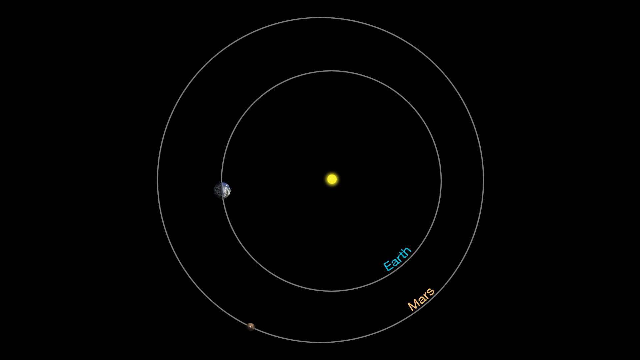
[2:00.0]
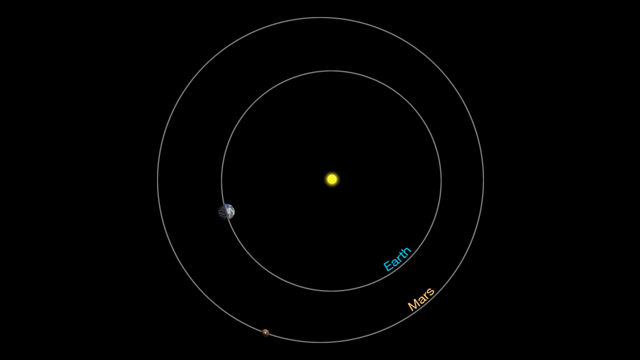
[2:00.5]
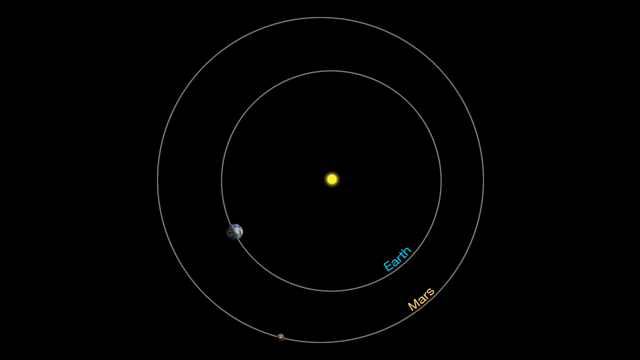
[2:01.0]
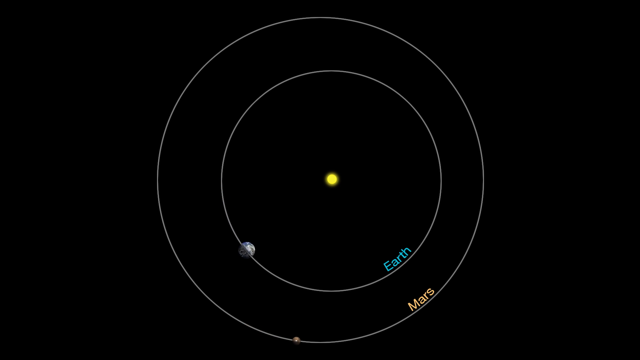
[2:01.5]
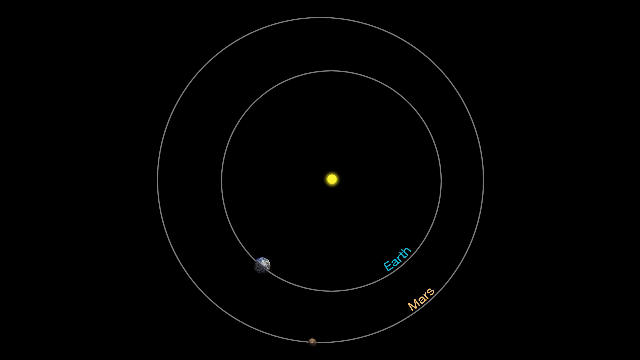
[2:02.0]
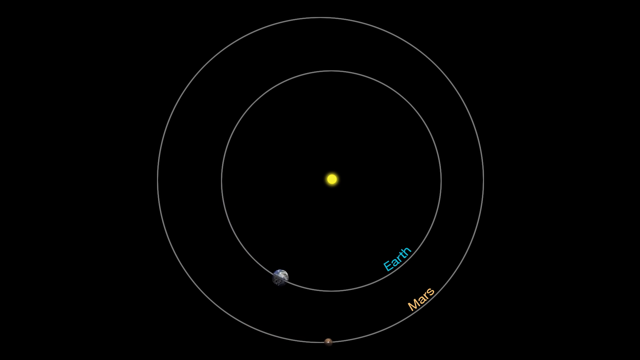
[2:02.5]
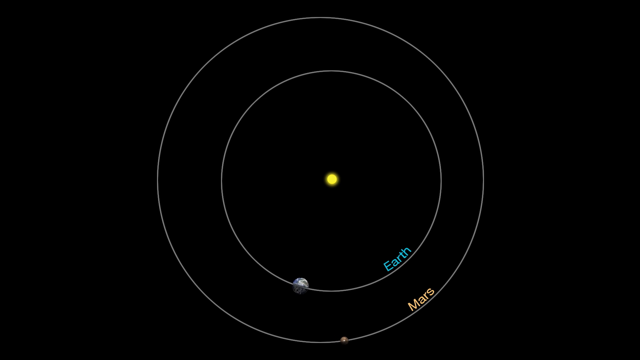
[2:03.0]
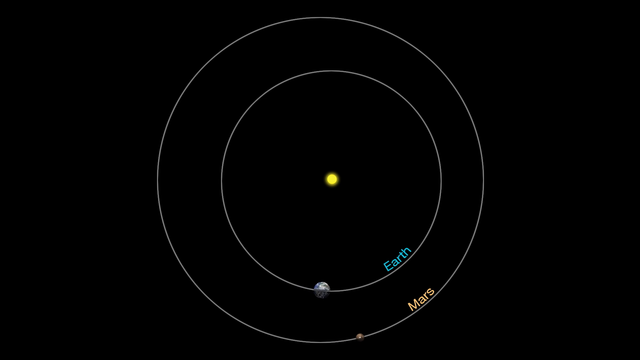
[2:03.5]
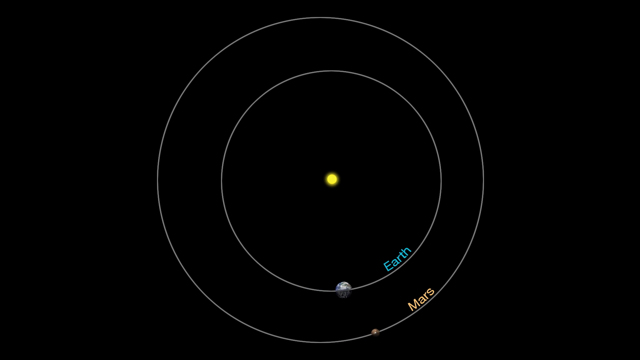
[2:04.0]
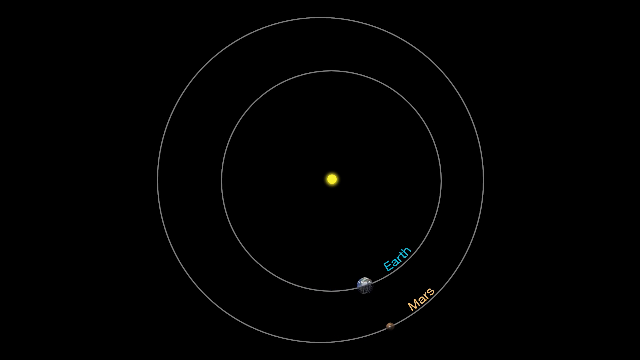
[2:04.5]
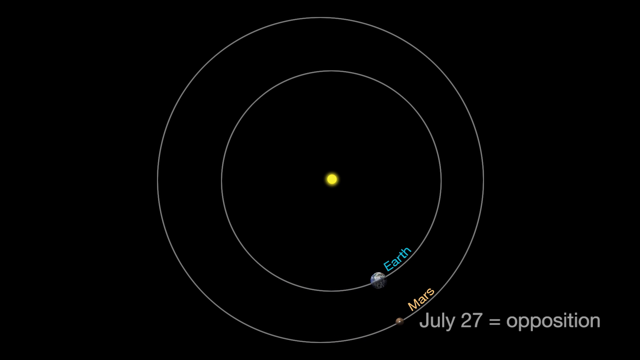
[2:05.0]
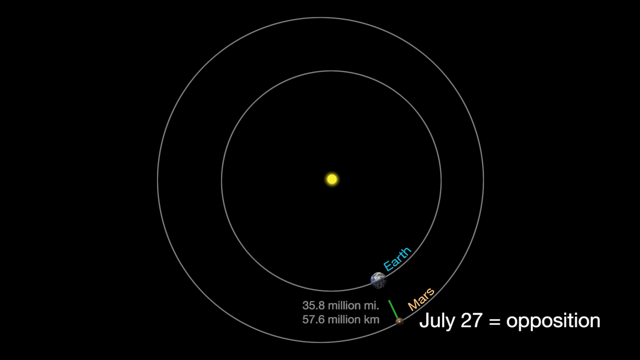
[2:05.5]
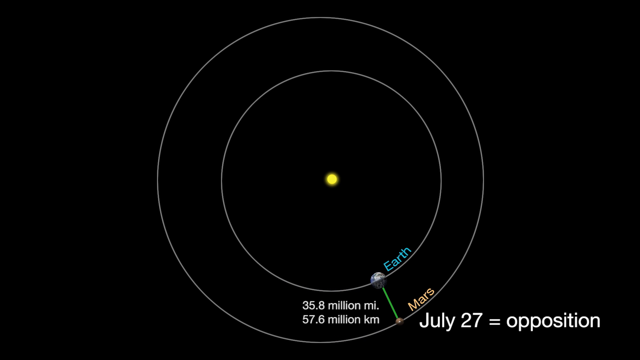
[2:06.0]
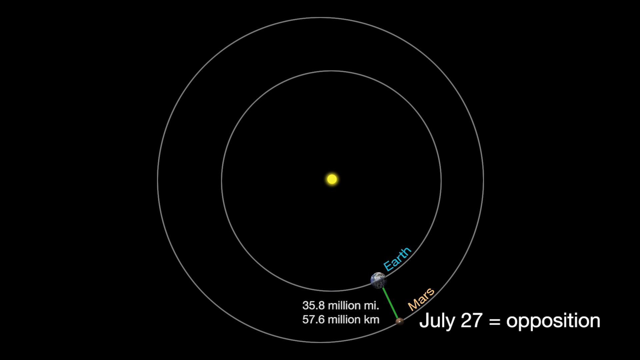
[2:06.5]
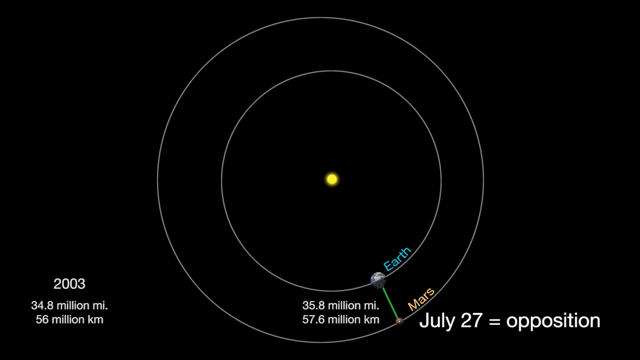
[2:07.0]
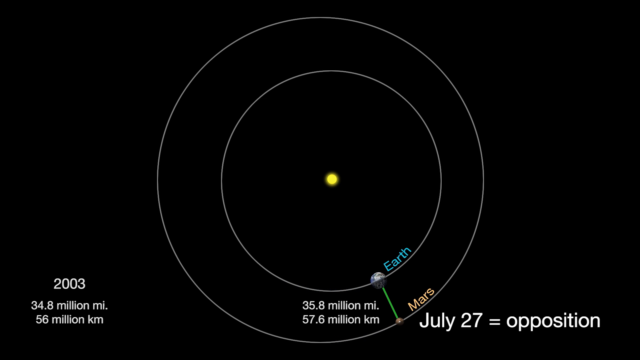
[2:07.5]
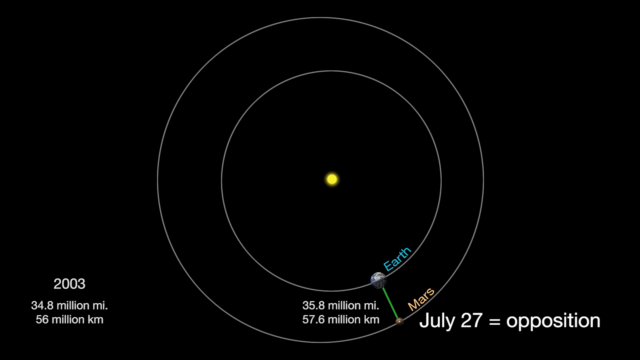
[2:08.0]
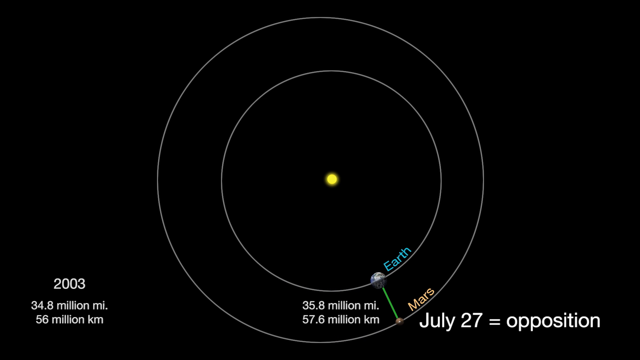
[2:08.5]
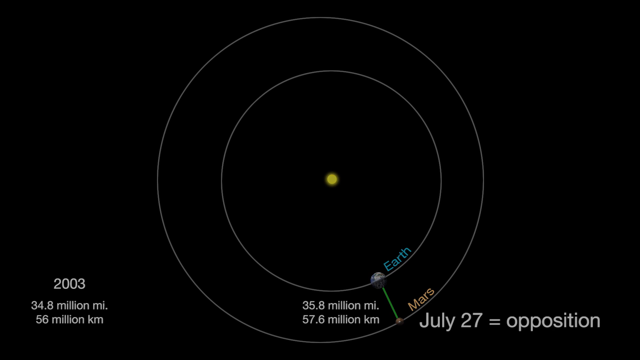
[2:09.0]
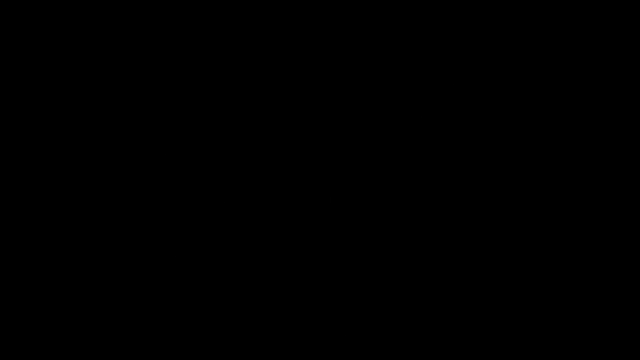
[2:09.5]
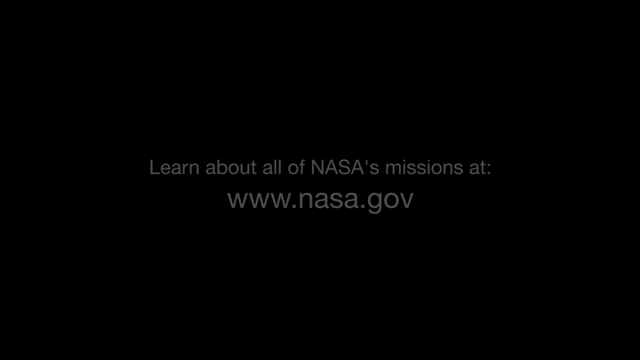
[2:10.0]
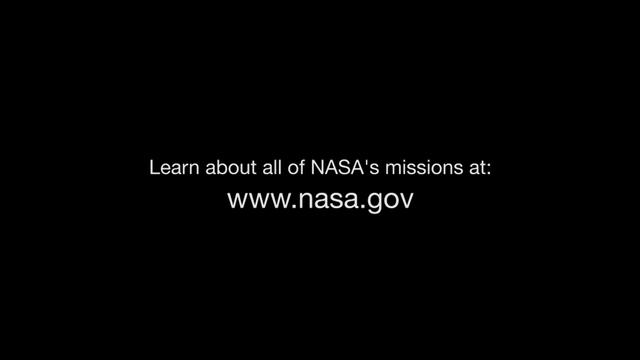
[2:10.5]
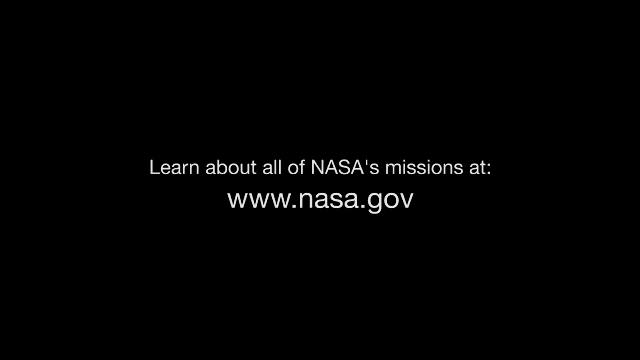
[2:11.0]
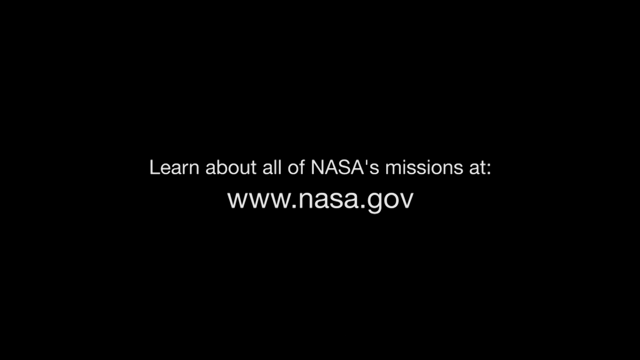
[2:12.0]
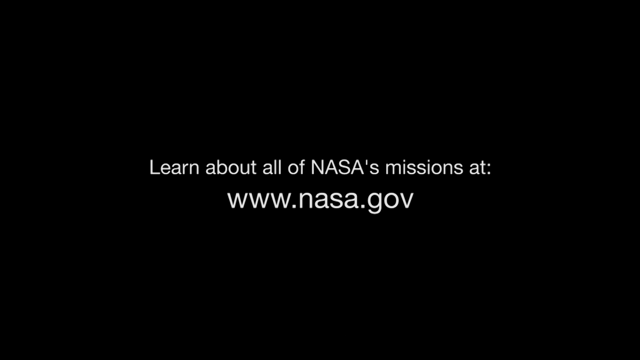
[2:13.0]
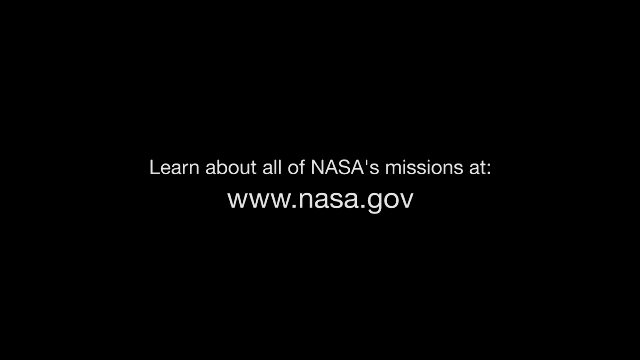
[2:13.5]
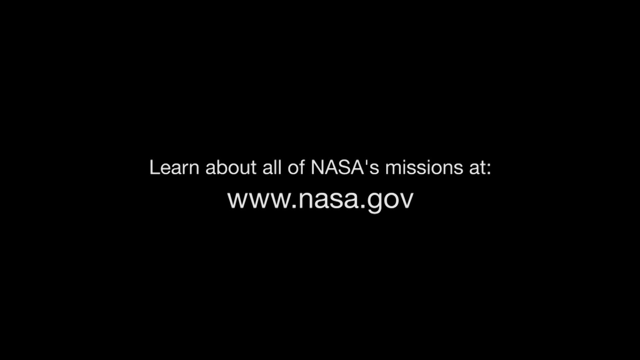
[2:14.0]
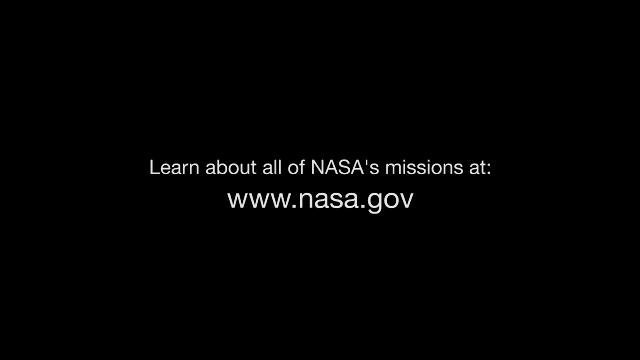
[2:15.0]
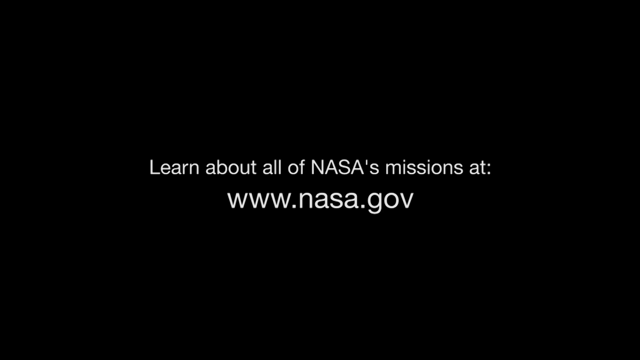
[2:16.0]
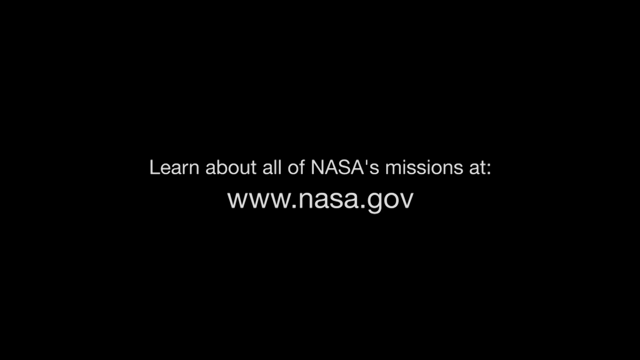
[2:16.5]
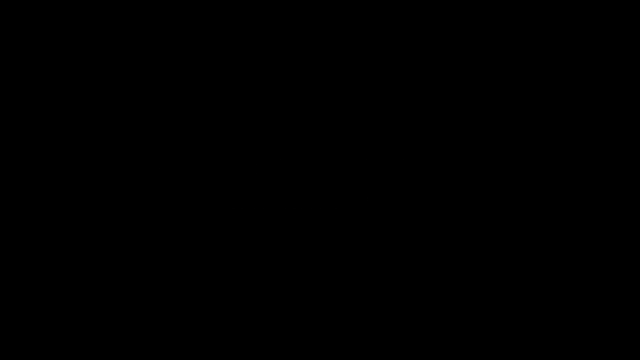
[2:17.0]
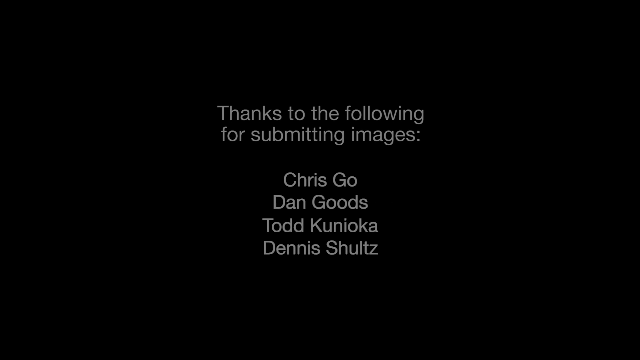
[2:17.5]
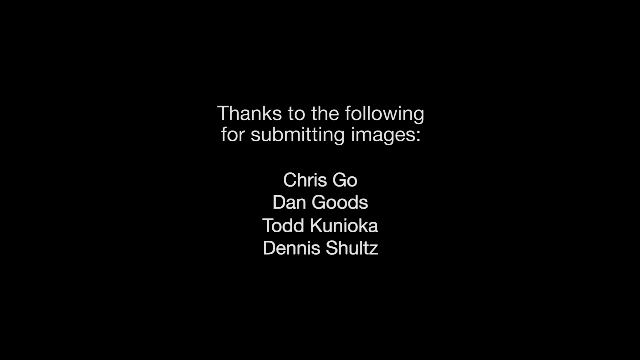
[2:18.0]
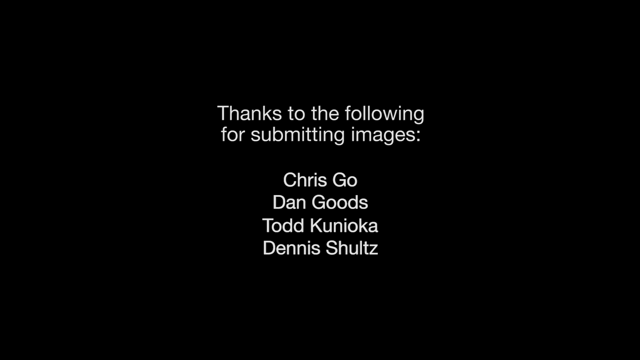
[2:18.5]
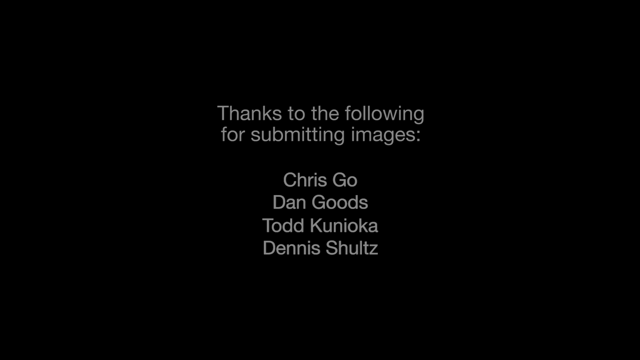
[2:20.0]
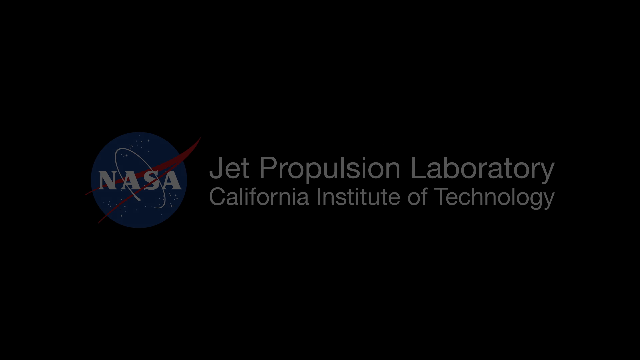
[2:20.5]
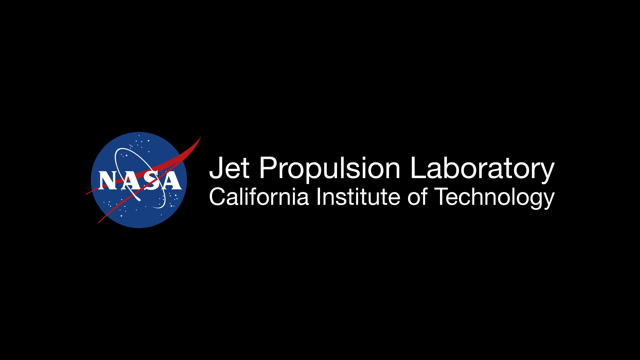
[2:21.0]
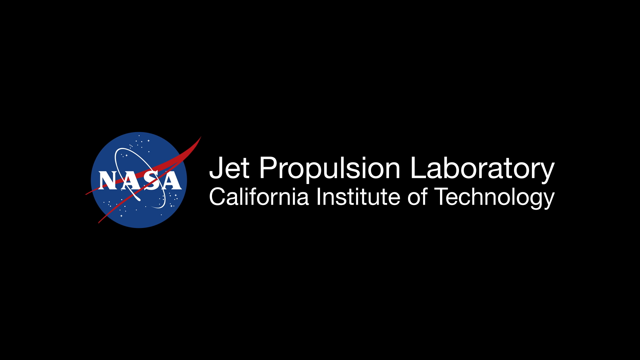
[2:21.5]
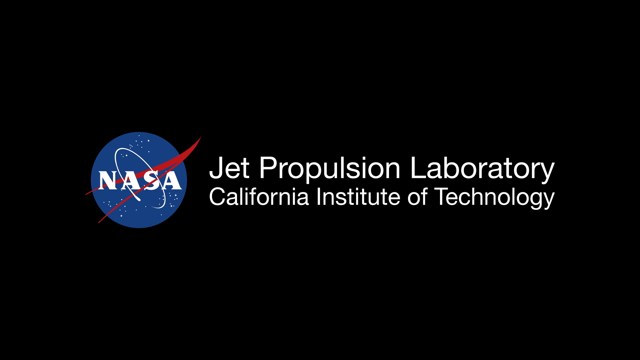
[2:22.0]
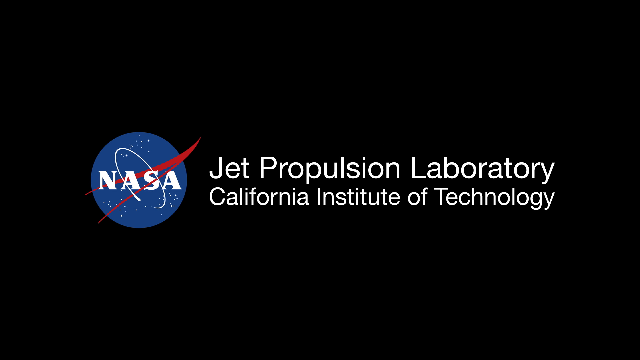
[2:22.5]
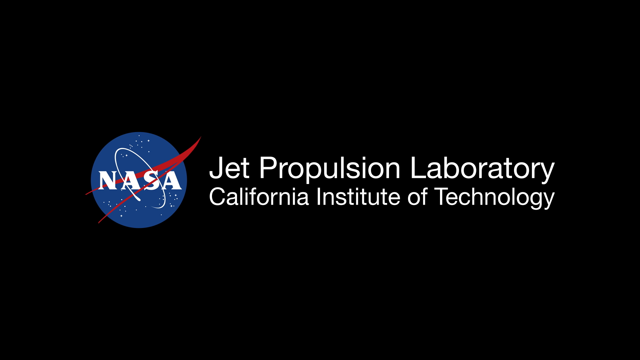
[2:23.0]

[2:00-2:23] A diagram shows two orbits, of Earth and of Mars, with Earth and Mars each moving along their orbits. At July 27th, the opposition, a parallel green line goes from Earth to Mars, and a distance of 35.8 million miles, or 57.6 million kilometers, is shown. Next comes the nasa.gov website, followed by credits that say "thanks to the following for submitting images" and name Chris Go, Dan Goods, Todd Kinioka and Dennis Schultz. The text fades, and the ending credits show the Jet Propulsion Laboratory of the California Institute of Technology along with the NASA seal, a blue circle with NASA written on it and what looks like a red flag, a white orbit and a few stars.